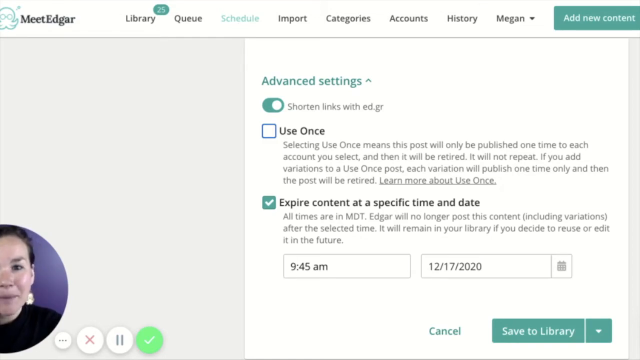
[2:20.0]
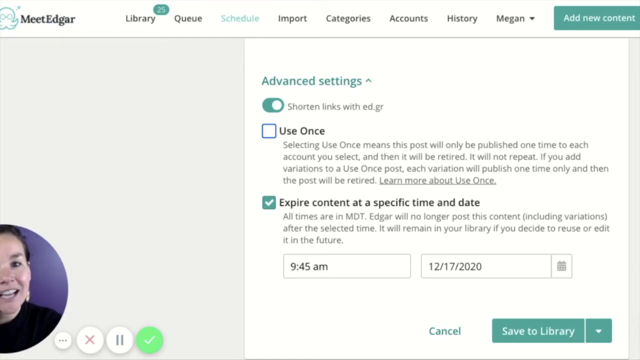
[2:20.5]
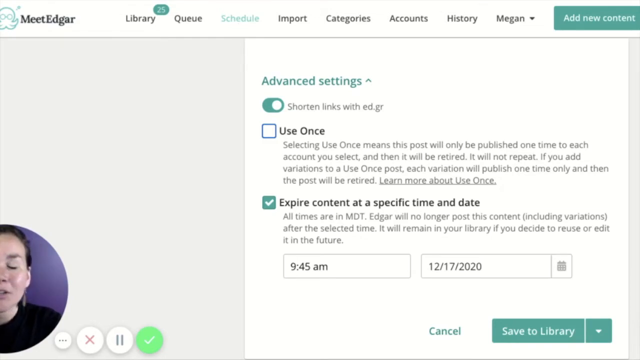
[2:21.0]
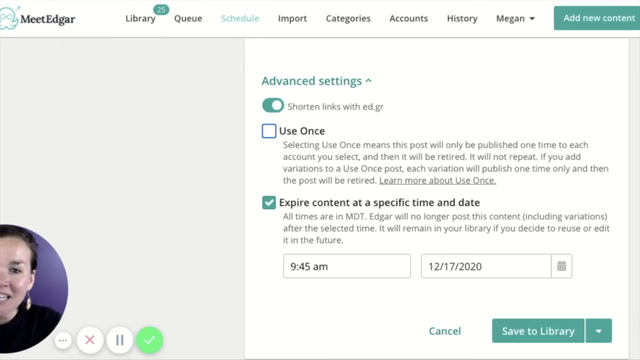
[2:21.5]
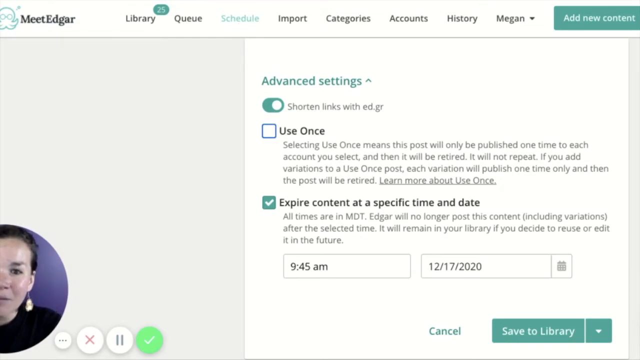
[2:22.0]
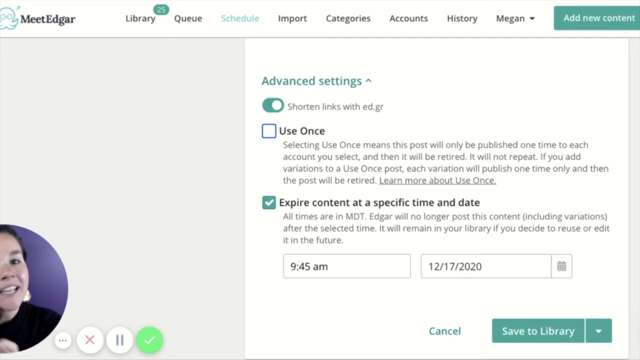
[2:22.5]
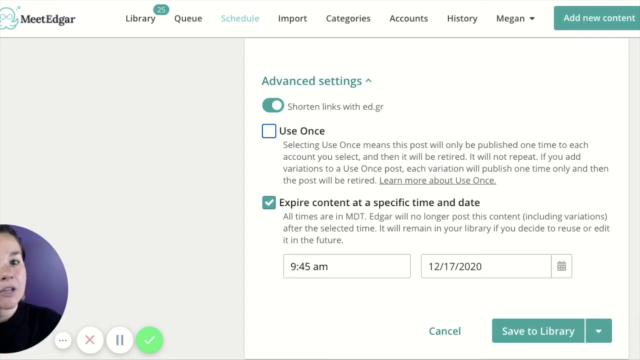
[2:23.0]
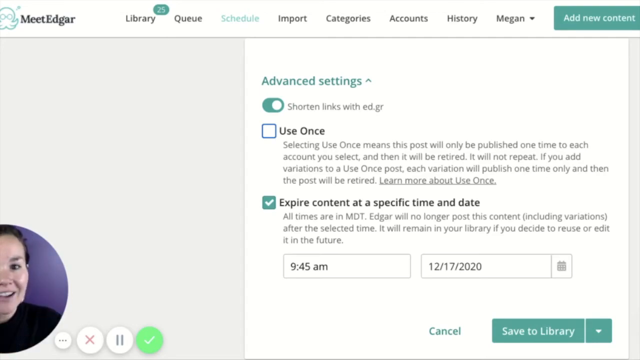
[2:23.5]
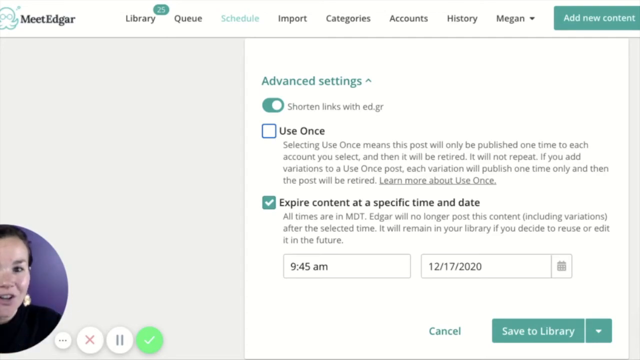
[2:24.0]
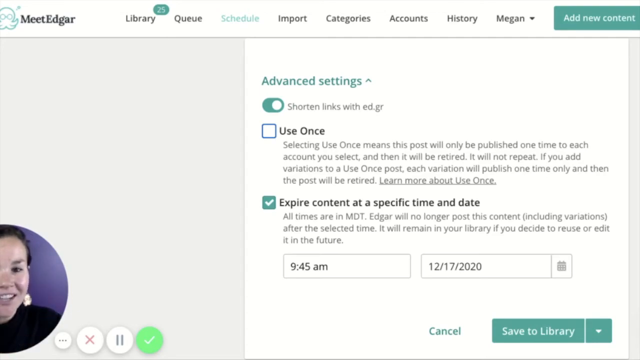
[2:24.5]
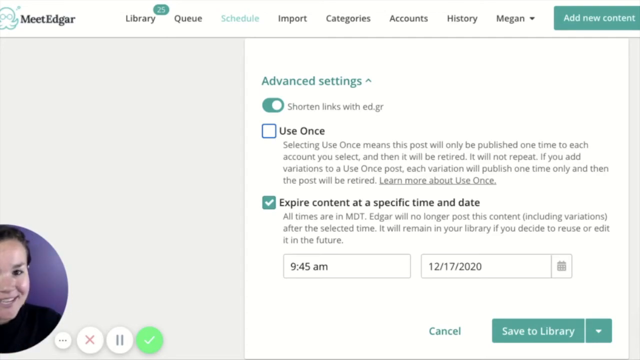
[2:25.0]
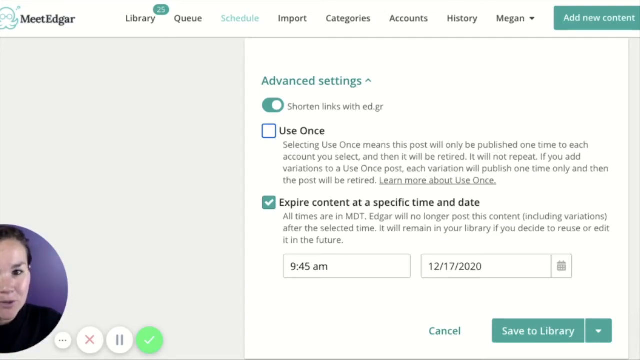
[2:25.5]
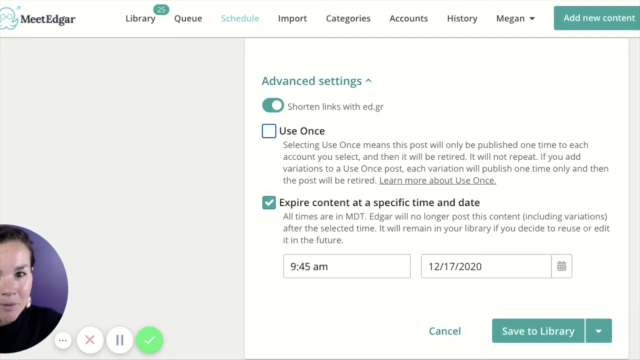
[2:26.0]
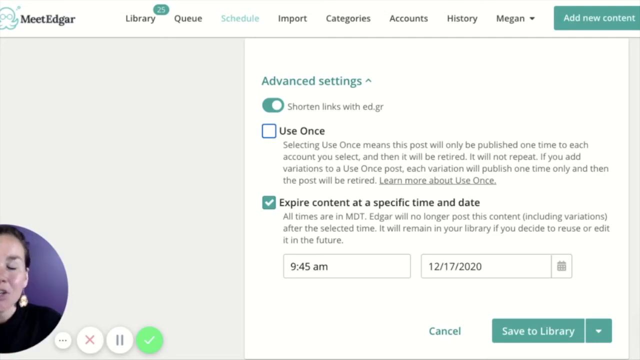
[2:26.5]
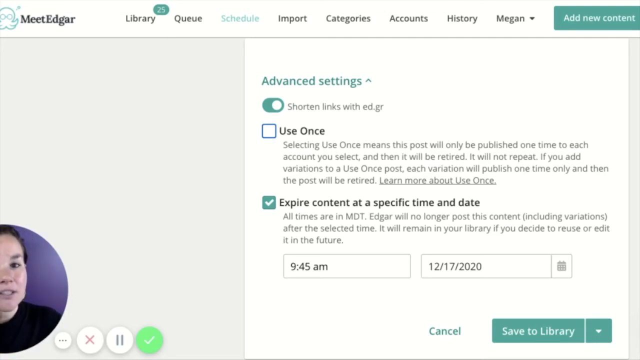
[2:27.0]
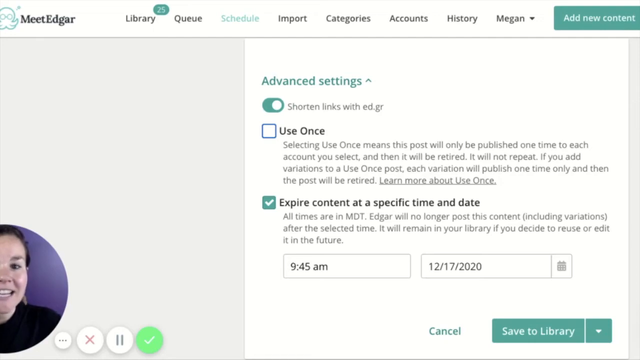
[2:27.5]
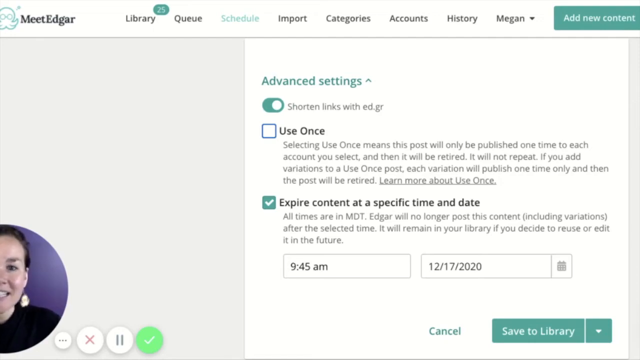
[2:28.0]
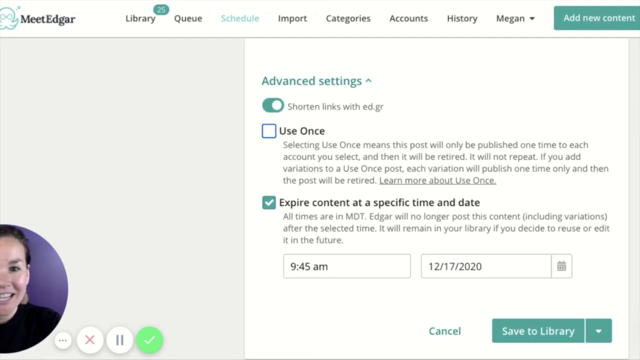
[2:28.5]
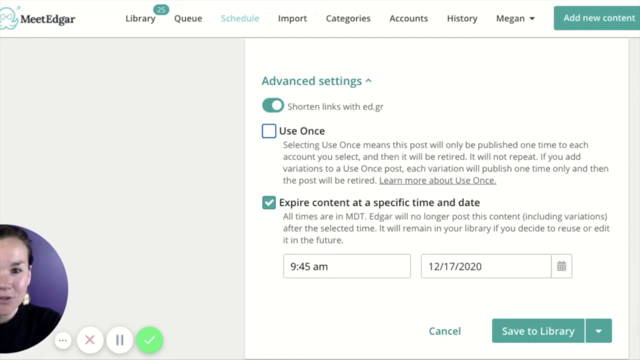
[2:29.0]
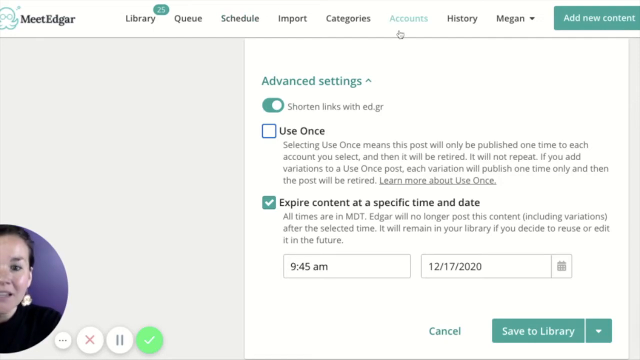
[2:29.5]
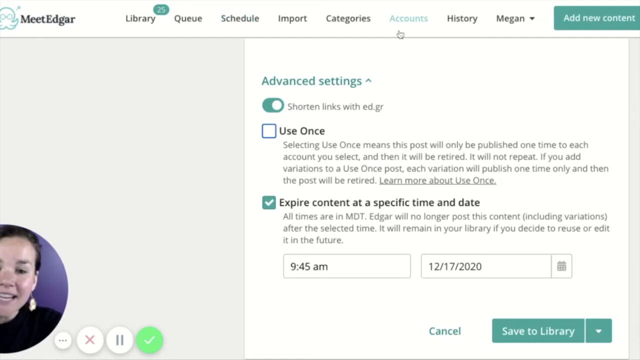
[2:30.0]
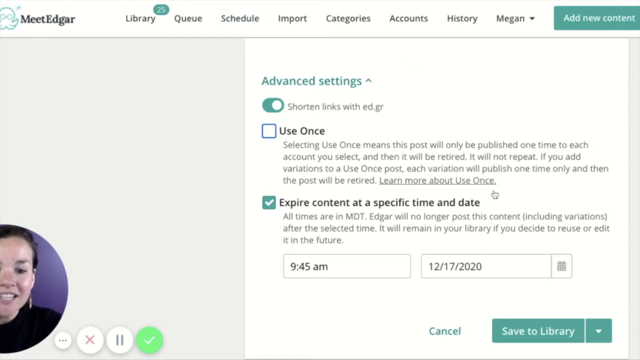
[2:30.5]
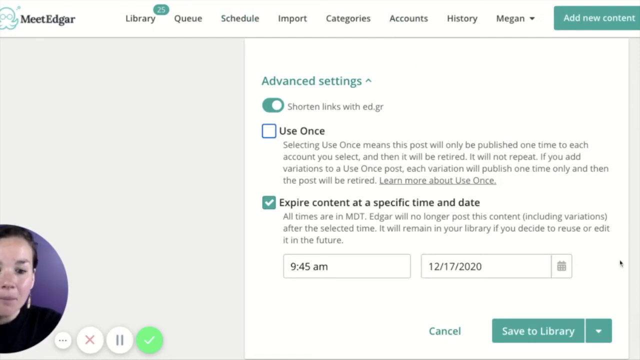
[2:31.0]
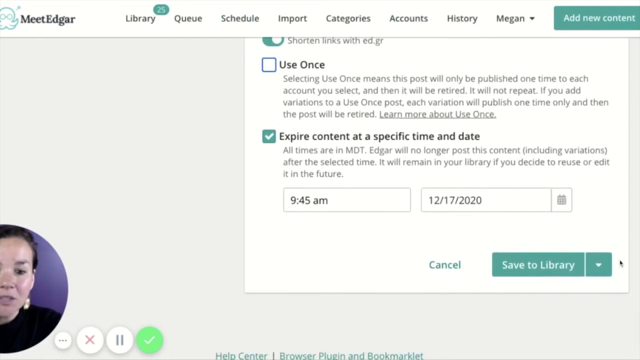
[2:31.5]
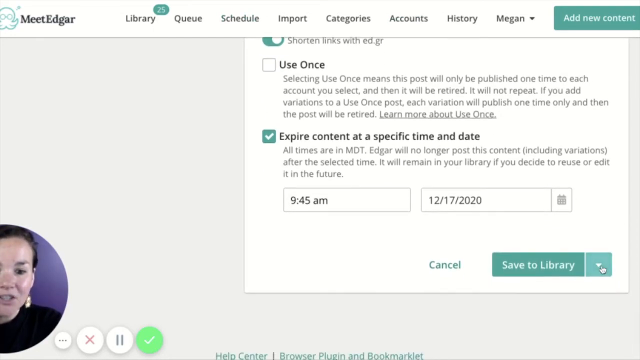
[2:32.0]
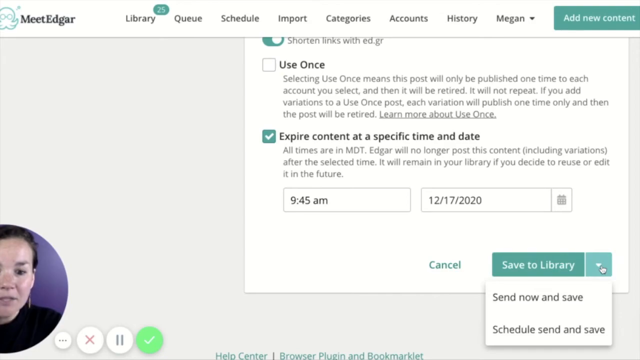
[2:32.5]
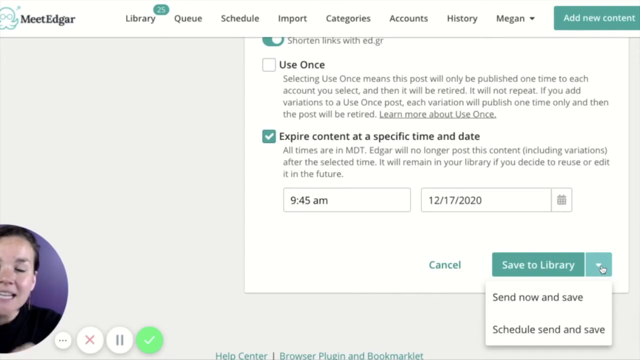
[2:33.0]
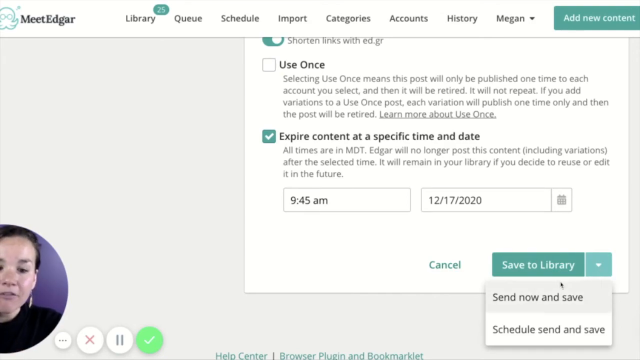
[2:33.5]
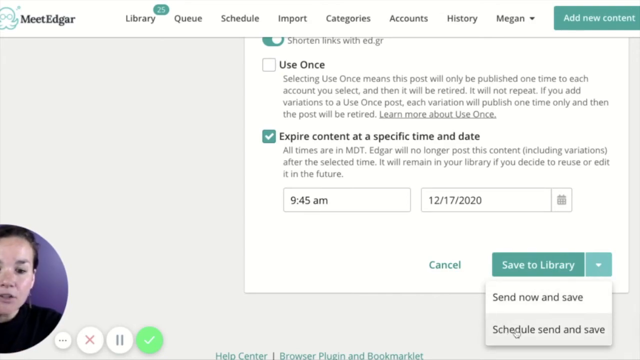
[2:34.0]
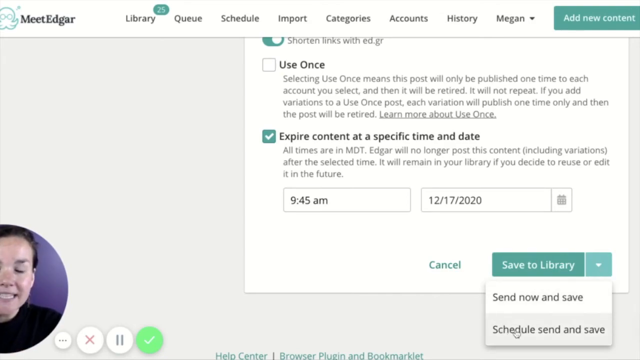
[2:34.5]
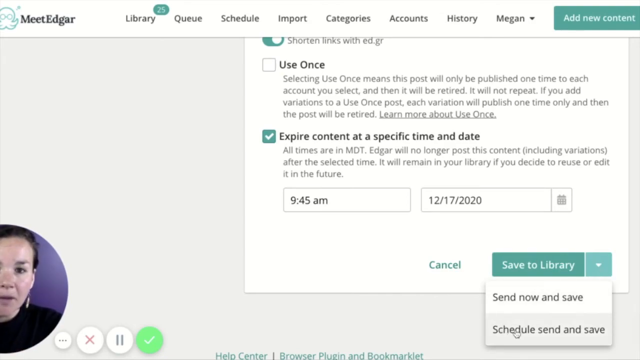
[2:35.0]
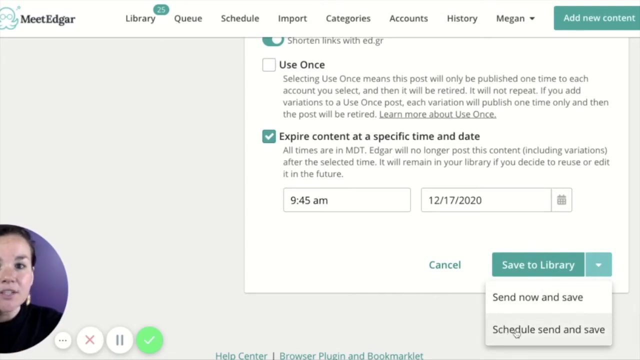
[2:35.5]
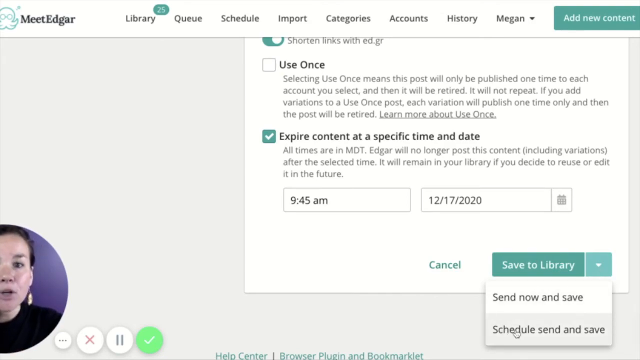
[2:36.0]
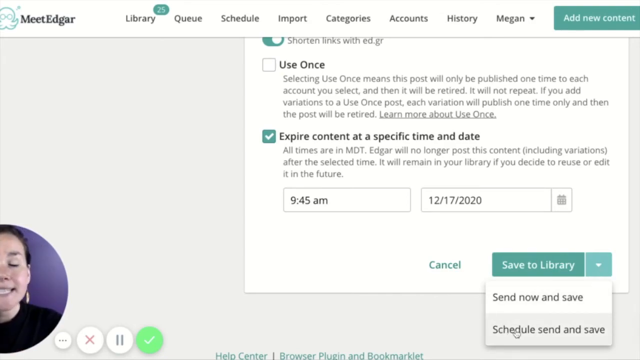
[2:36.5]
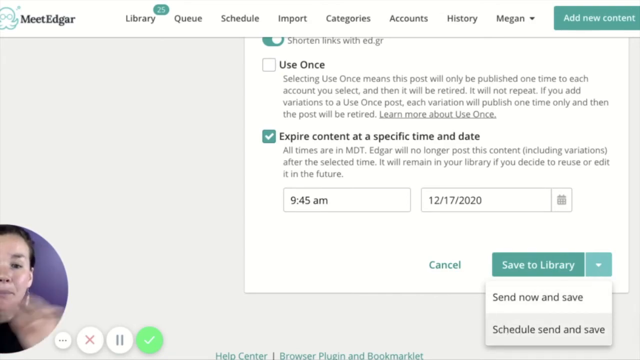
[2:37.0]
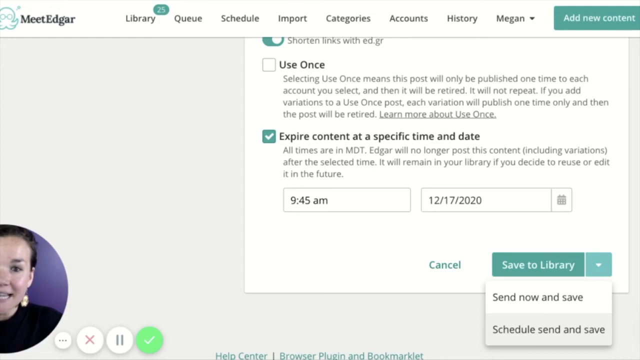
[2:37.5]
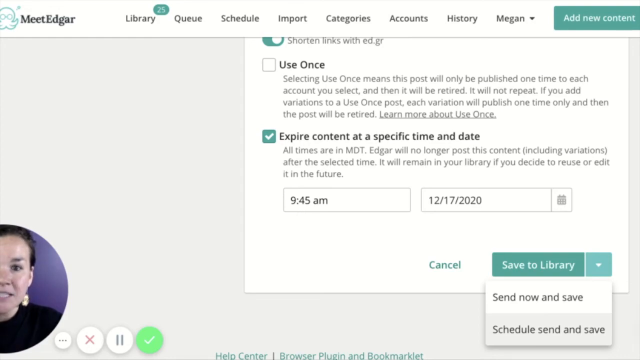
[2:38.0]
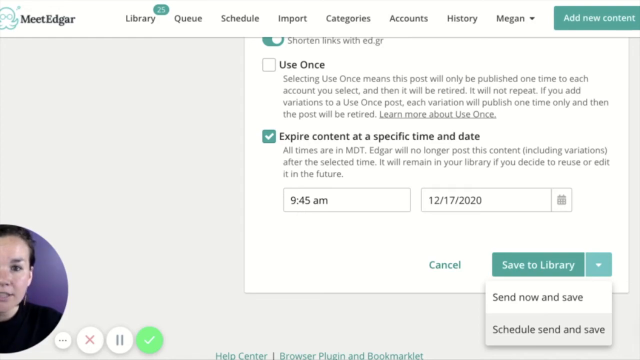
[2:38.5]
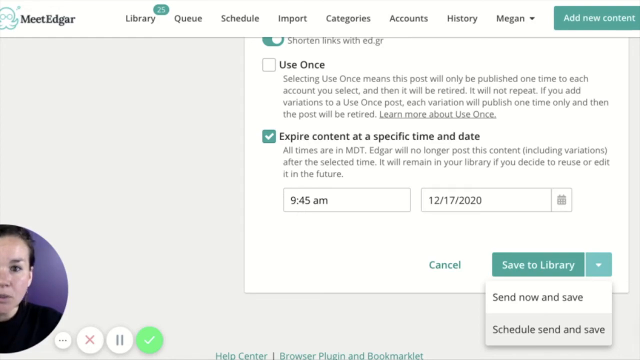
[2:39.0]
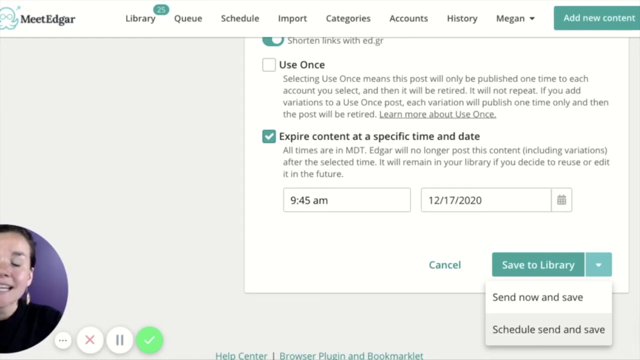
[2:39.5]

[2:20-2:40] The woman continues with the advanced settings section. Underneath it is an enabled "shorten links with ed.gr" button, then an unticked "Use Once" checkbox, and below that a ticked "Expire Content at a Specific Time and Date" checkbox. Below these are Time and Date fields showing 9.45 AM and 12/17/2020. She hovers her cursor over the section labeled "Accounts," then quickly moves it down to the bottom where it says "Save to Library," with the text "Send Now and Save" beneath it. The top left corner of the screen shows the text "MeetEdgar" with an animated icon on its left, and the platform's sections are to the right.